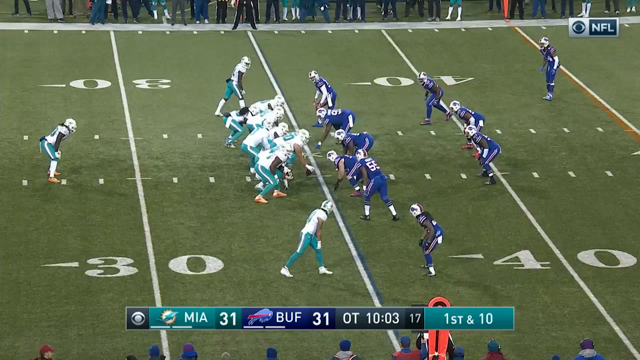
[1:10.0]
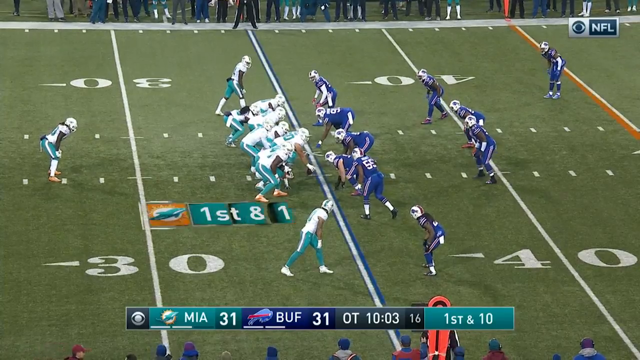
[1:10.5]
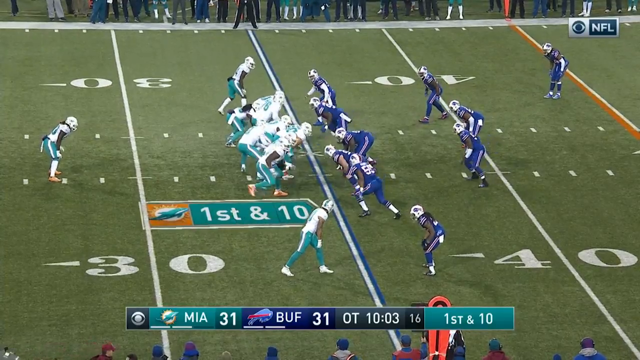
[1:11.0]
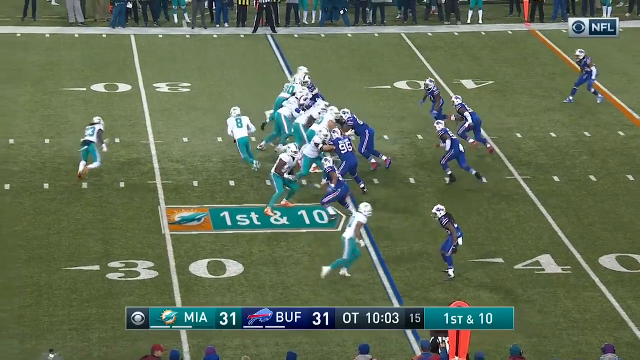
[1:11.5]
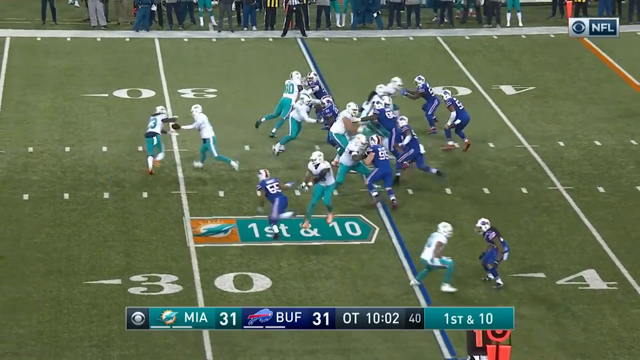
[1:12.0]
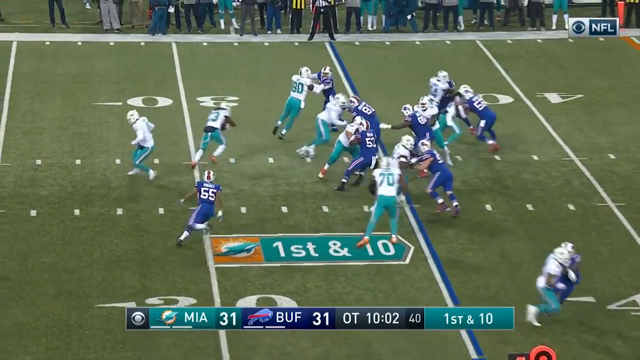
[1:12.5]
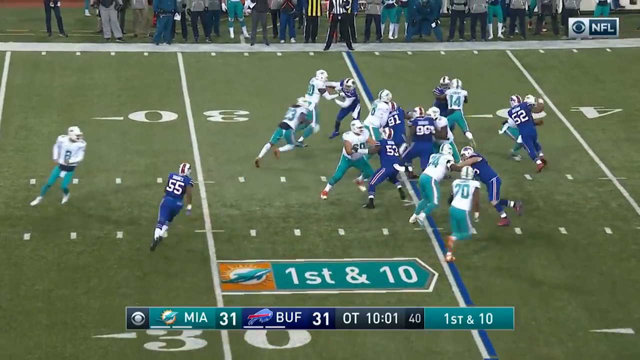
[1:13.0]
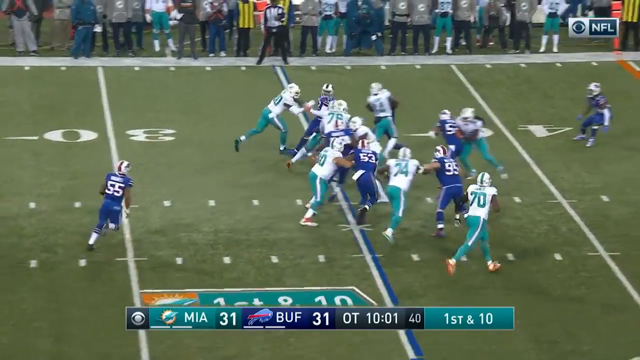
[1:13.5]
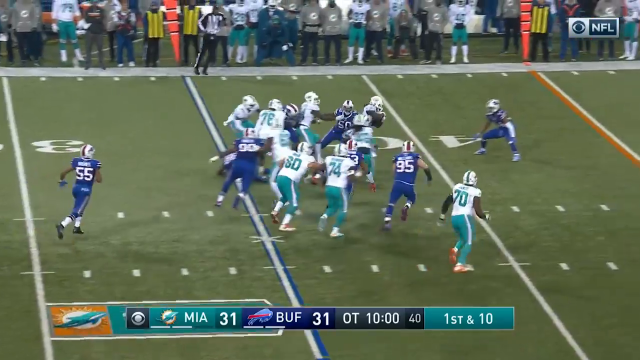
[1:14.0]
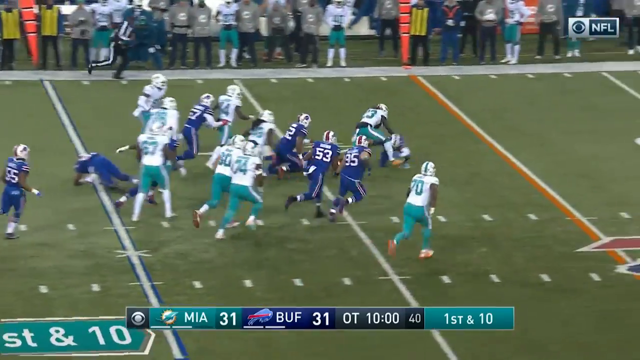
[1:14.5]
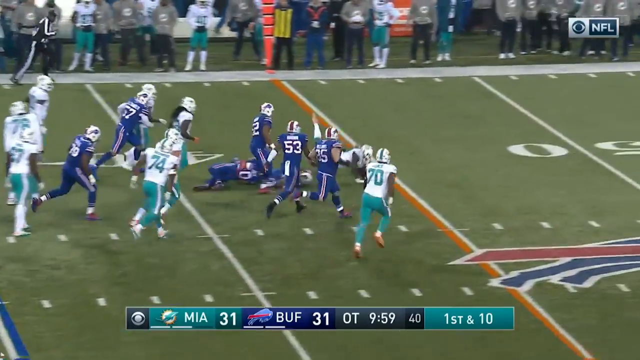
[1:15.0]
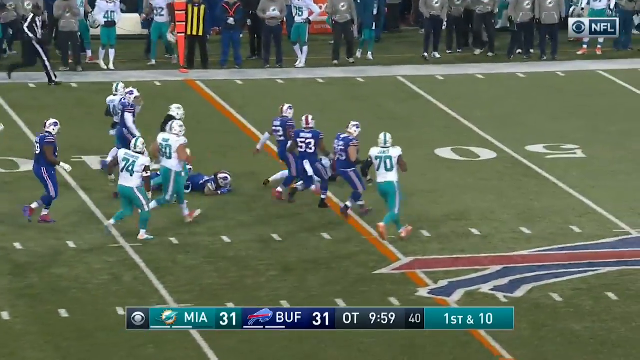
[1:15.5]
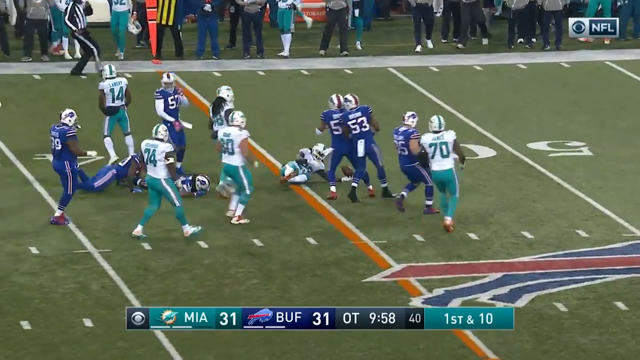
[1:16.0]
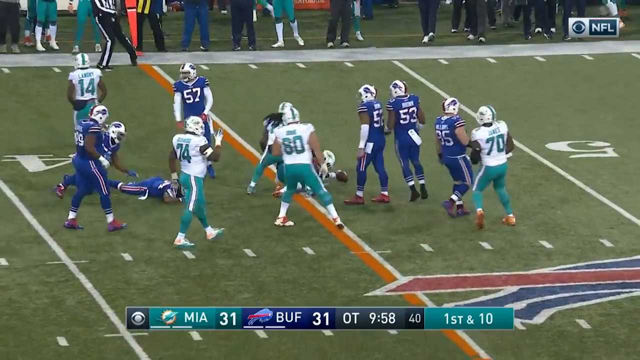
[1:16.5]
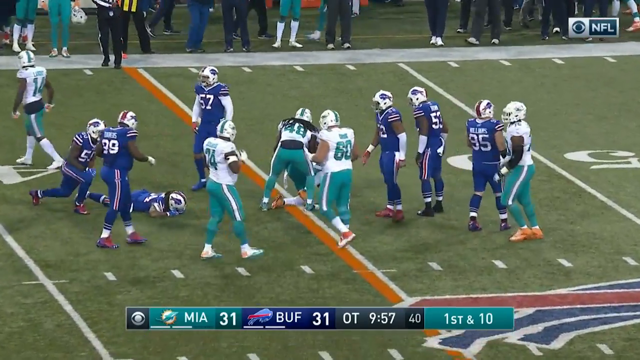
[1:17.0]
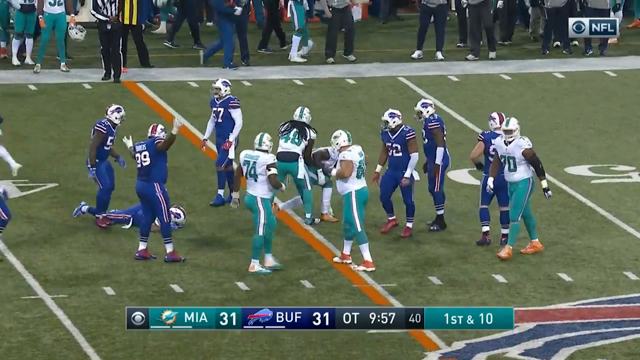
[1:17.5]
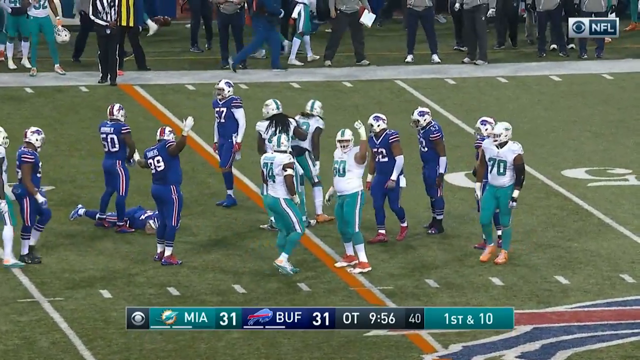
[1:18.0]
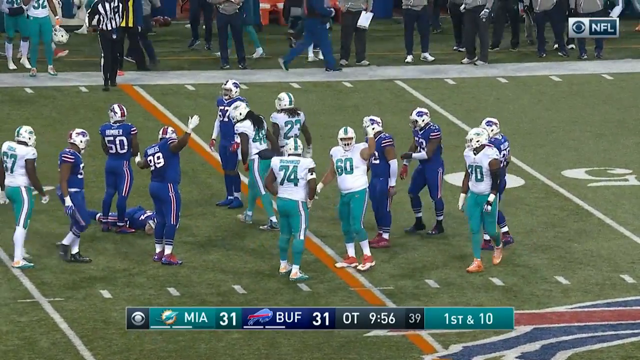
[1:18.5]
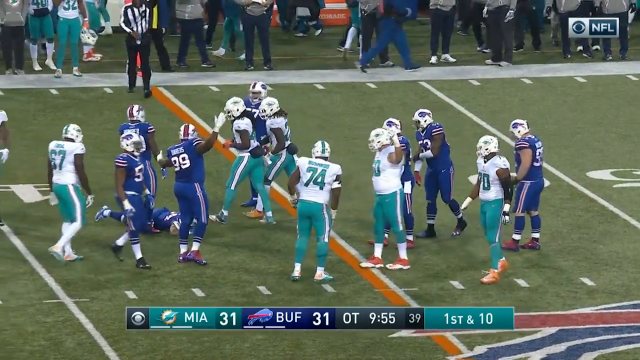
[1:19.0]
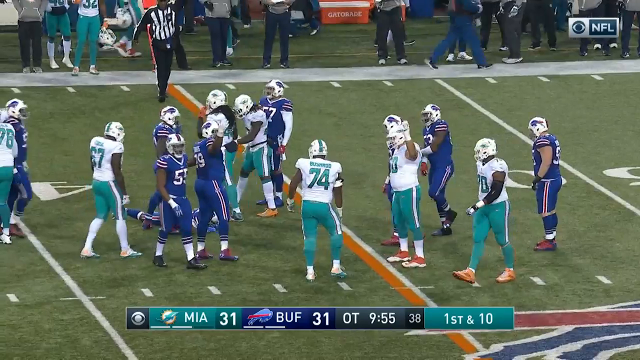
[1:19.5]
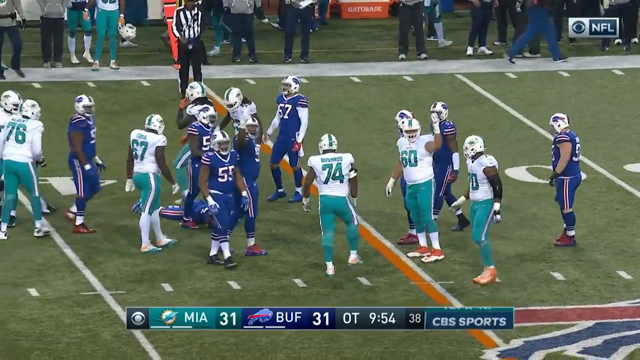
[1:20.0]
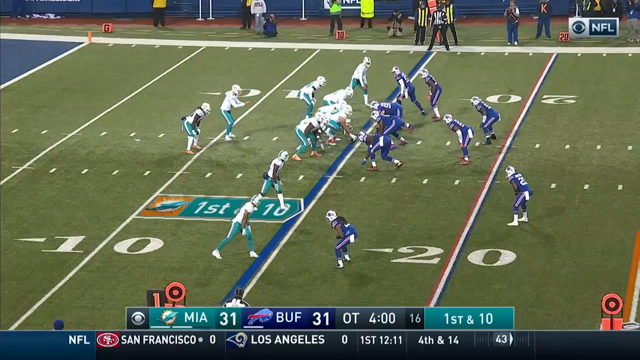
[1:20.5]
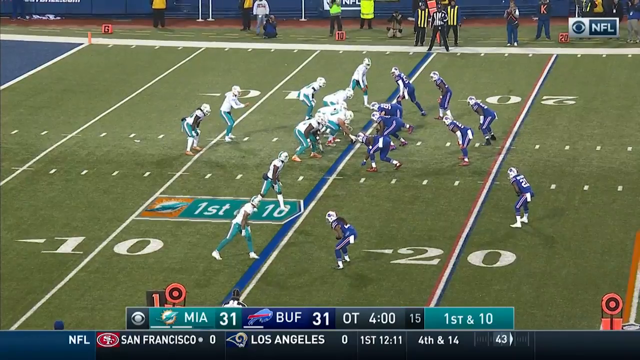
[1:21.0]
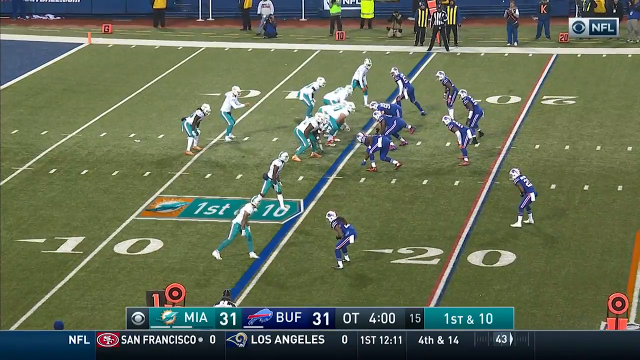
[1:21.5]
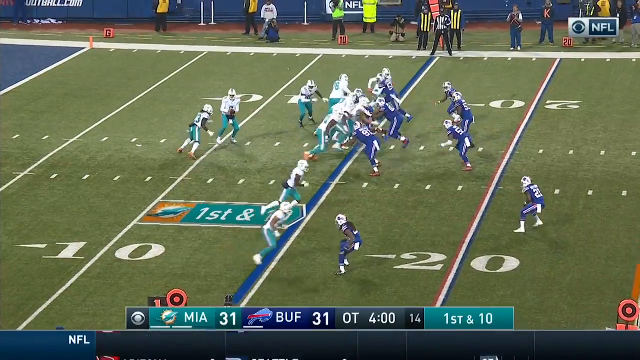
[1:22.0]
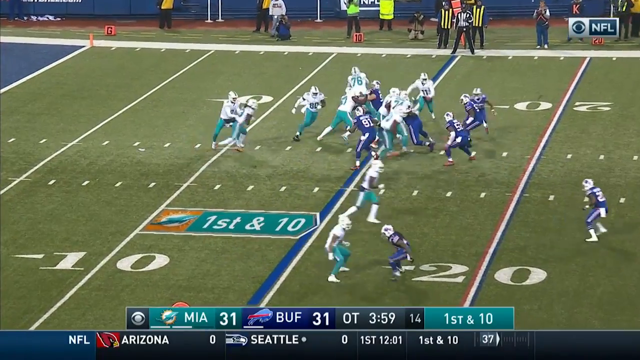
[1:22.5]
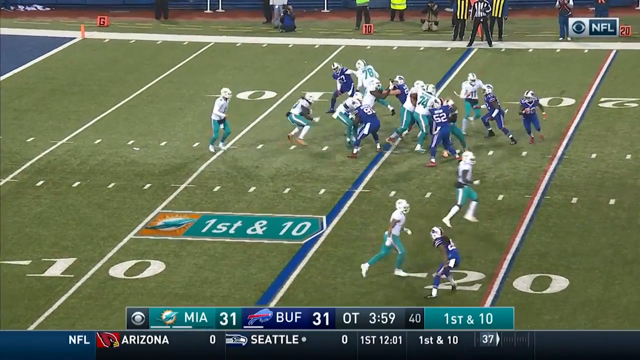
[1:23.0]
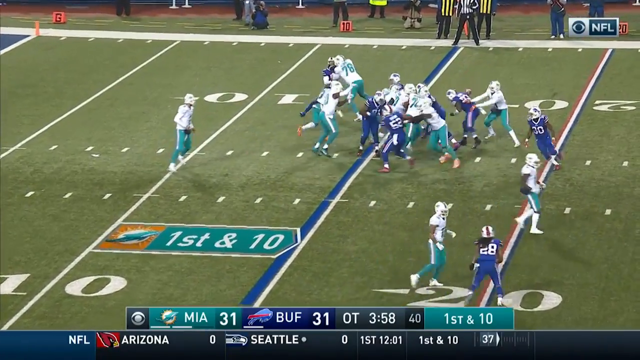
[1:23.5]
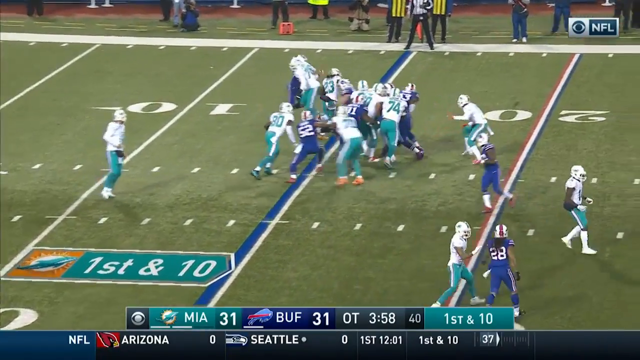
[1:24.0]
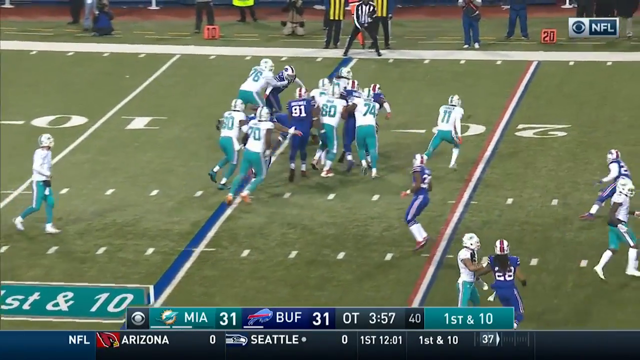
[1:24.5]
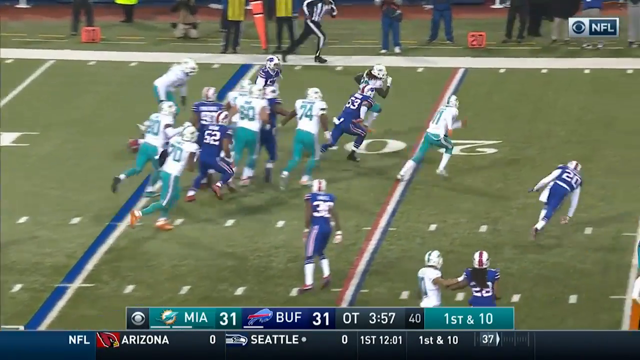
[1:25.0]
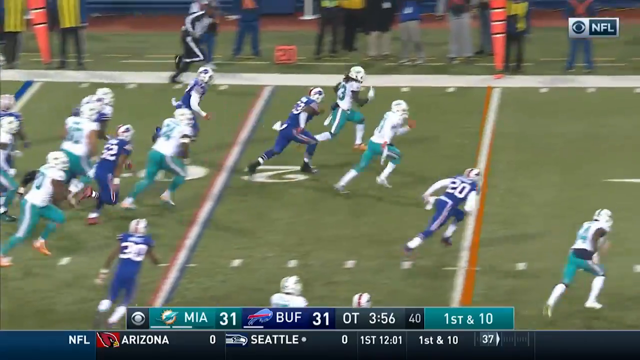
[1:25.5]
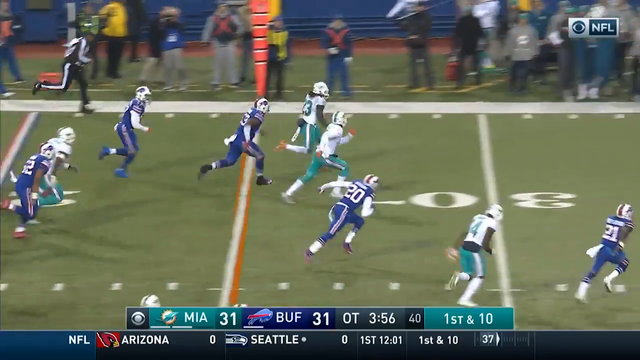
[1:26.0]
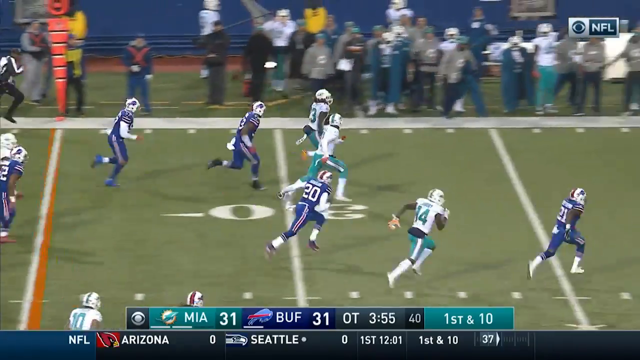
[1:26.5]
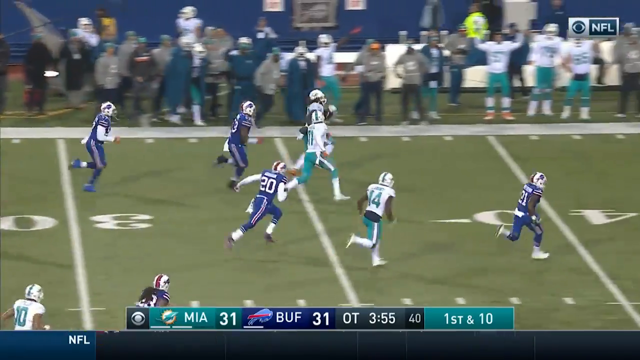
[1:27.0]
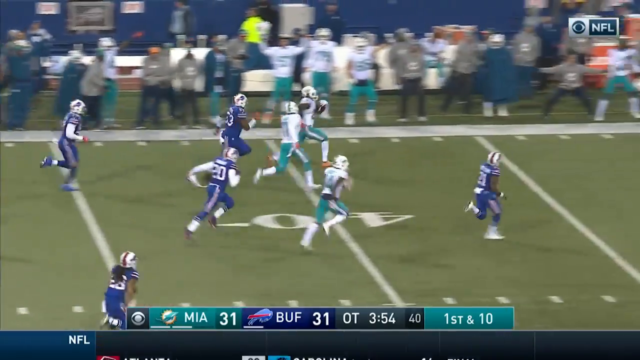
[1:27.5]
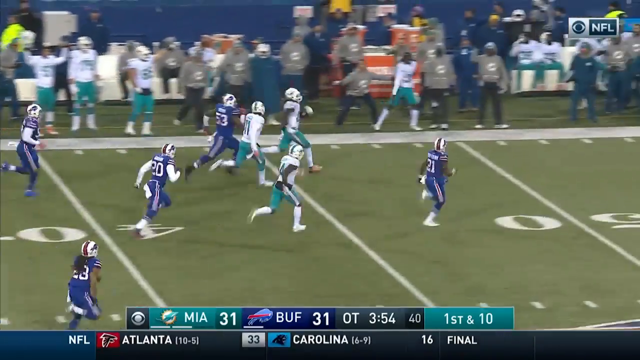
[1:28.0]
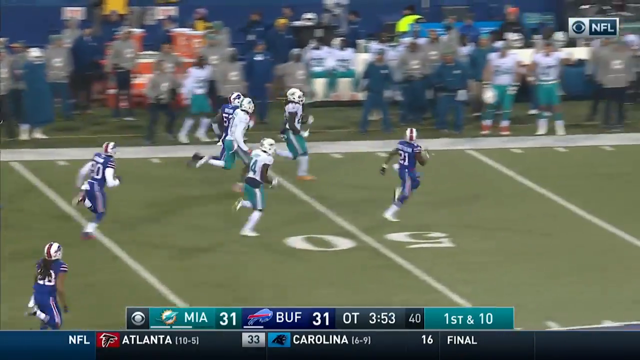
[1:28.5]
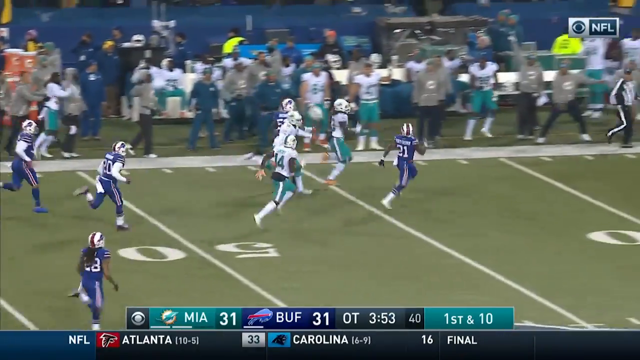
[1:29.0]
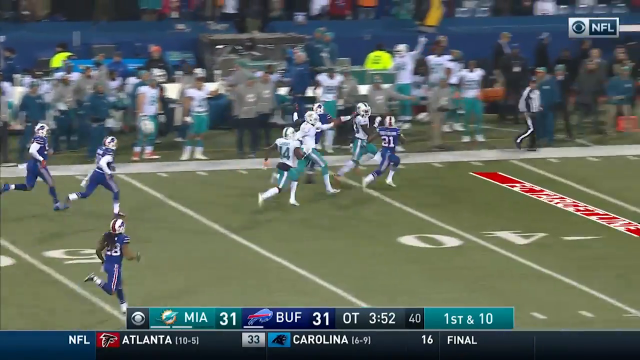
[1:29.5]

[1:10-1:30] Highlights continue from the NFL game between the Miami Dolphins and the Buffalo Bills, which appears to be played in Buffalo. The Dolphins wear predominantly white jerseys. Around the 35-yard line, heading to the right of the screen, the quarterback hands the ball to number 23, who runs to the left of the defense, goes between a few defenders, and tries to jump over; another defender hits his legs and he falls around the 45-yard line. A teammate helps him back up. In a subsequent play, around the 10-yard line, number 23 goes around a defender to the left, breaks free, and starts running with two defenders chasing. A teammate comes over and slightly blocks one defender, another defender comes over to help, and they close in on number 23 near the boundary line.